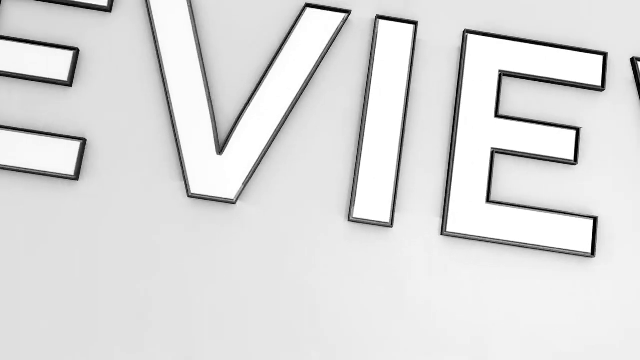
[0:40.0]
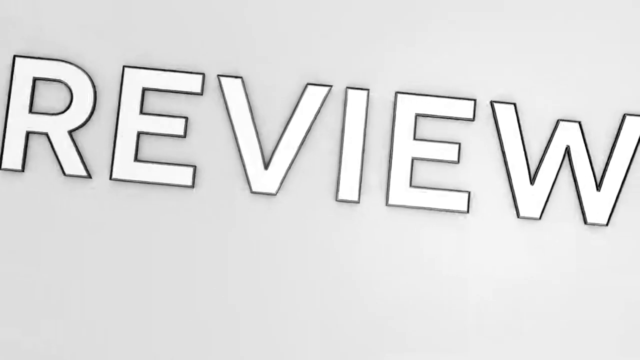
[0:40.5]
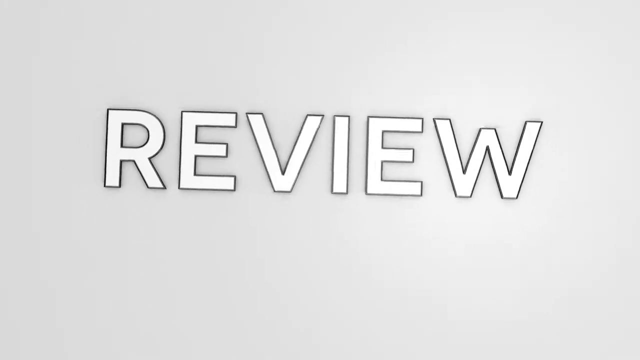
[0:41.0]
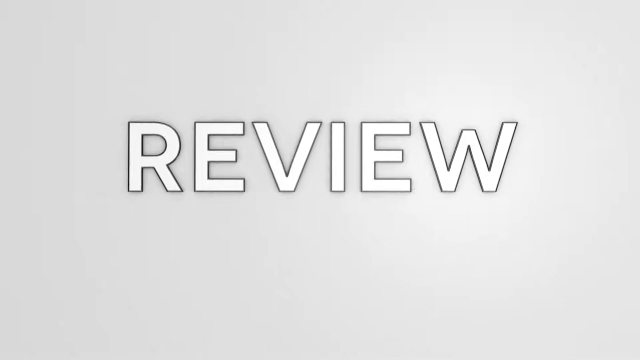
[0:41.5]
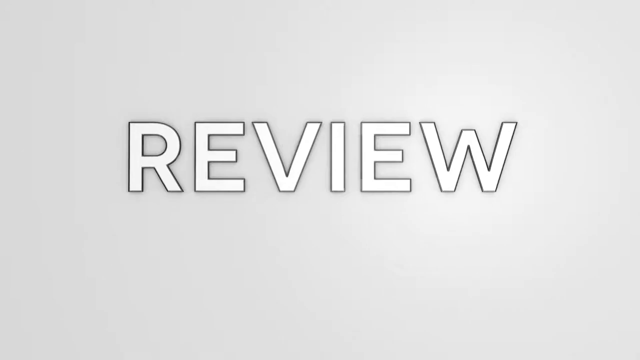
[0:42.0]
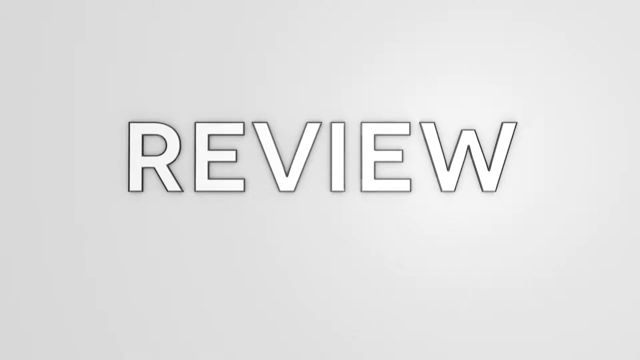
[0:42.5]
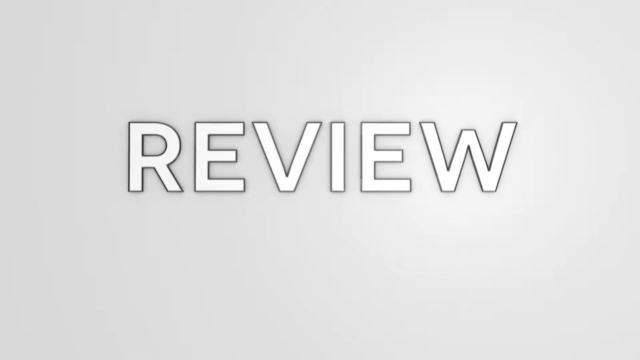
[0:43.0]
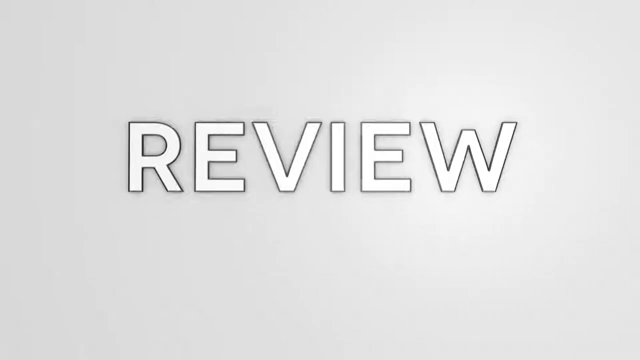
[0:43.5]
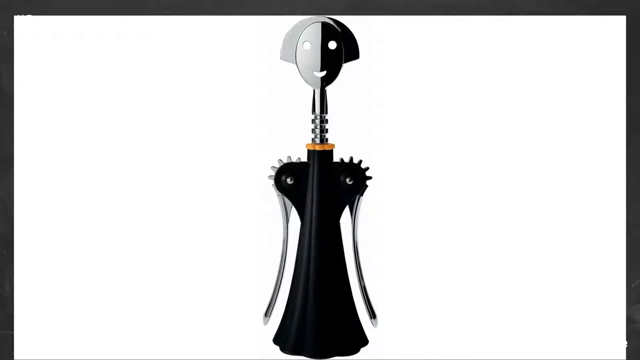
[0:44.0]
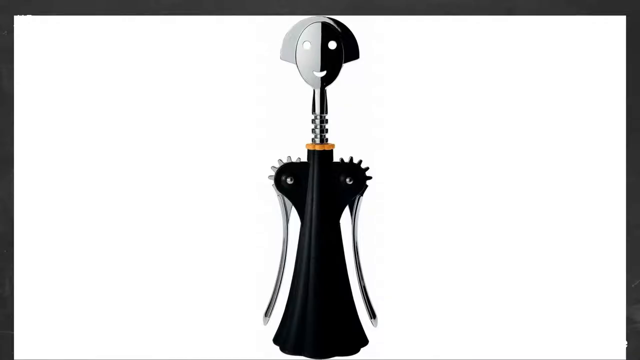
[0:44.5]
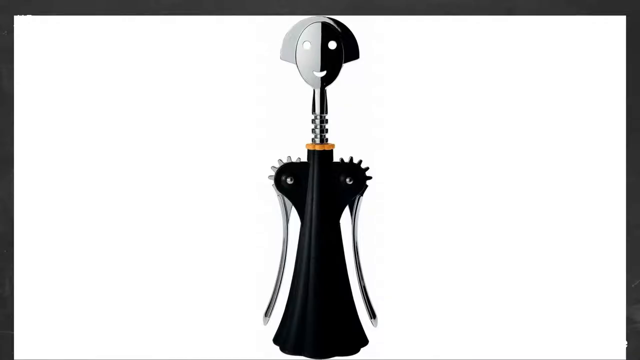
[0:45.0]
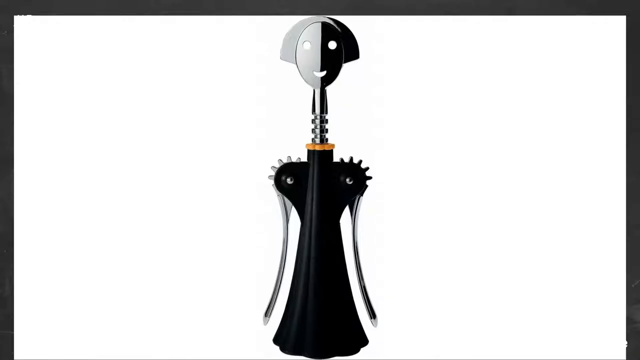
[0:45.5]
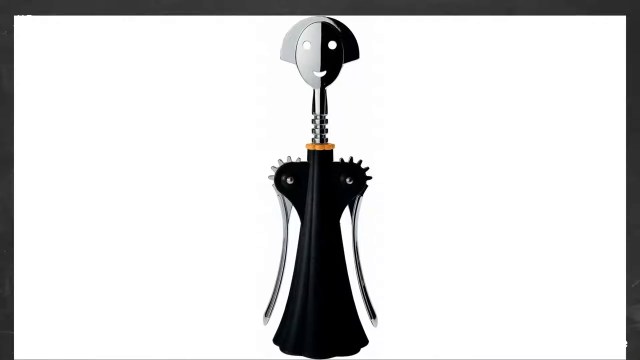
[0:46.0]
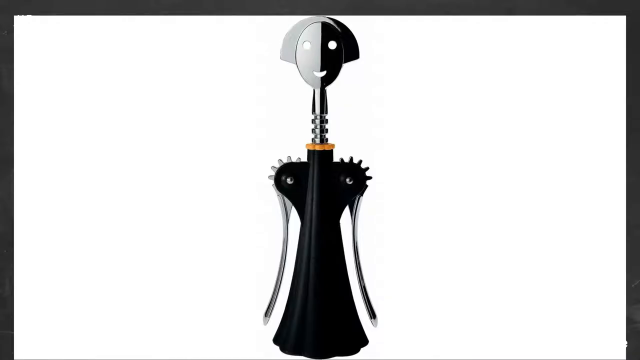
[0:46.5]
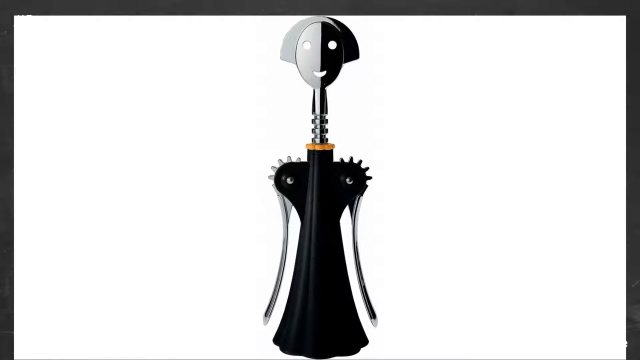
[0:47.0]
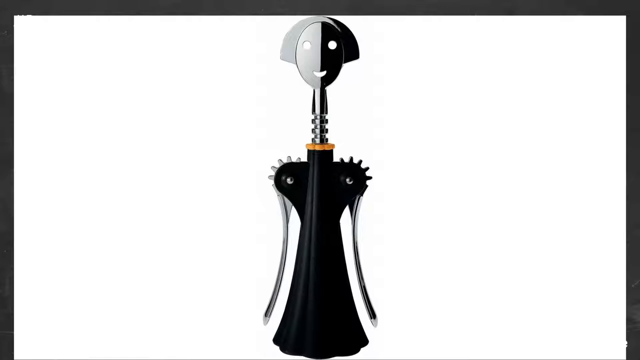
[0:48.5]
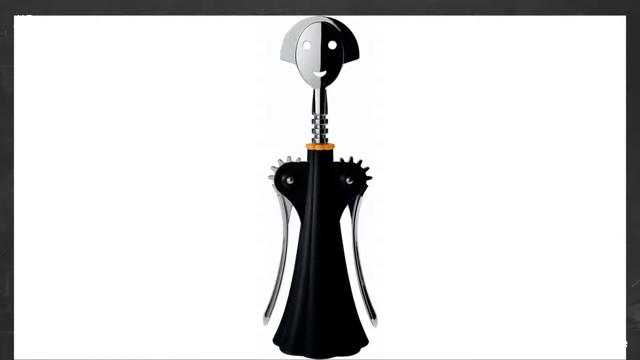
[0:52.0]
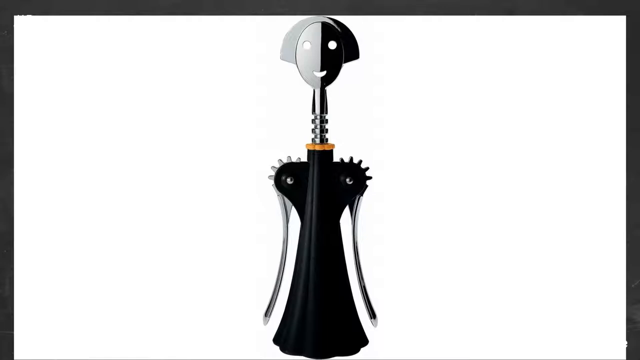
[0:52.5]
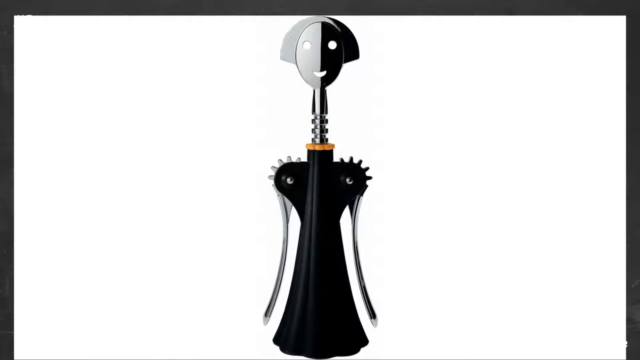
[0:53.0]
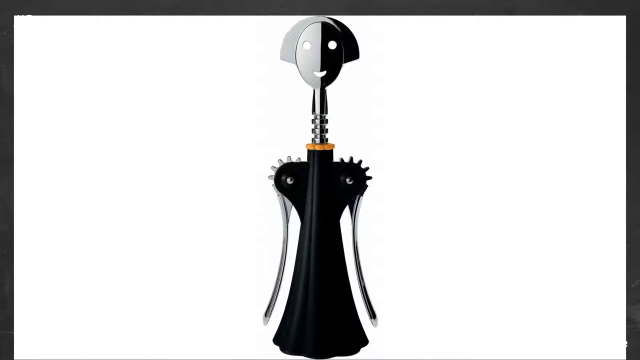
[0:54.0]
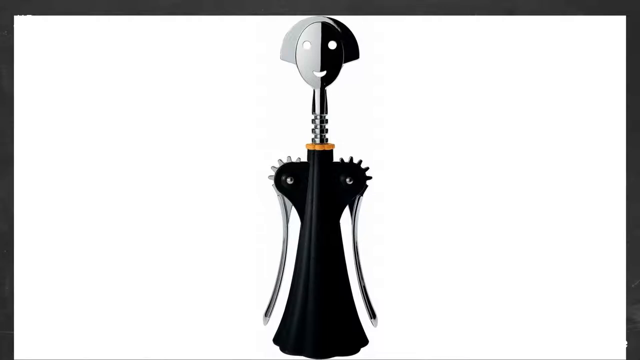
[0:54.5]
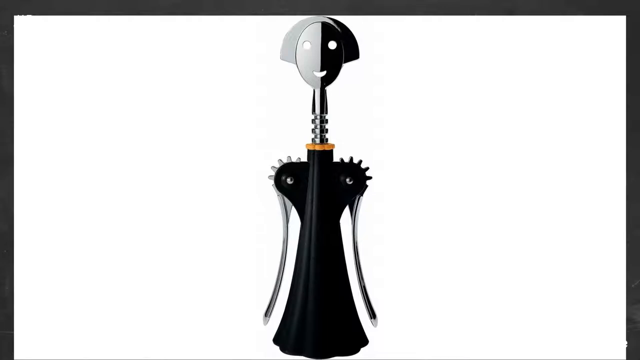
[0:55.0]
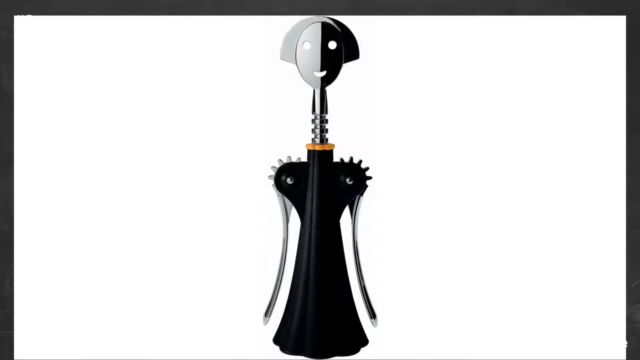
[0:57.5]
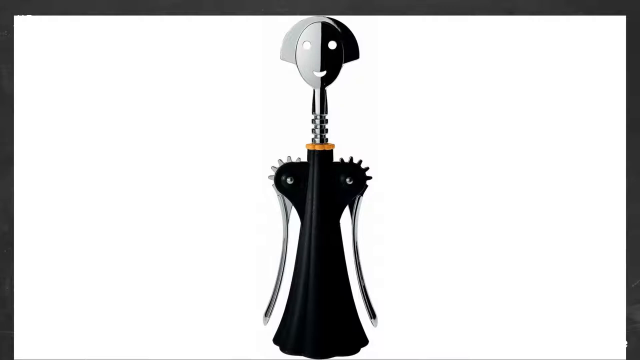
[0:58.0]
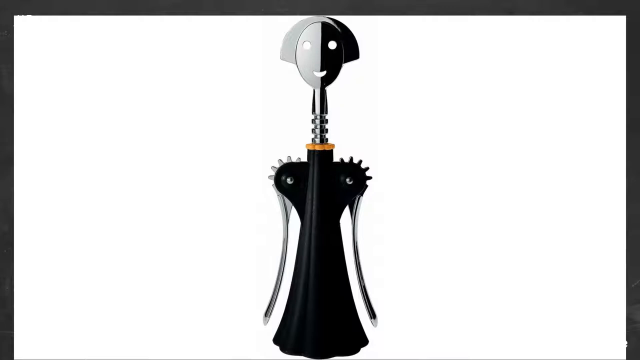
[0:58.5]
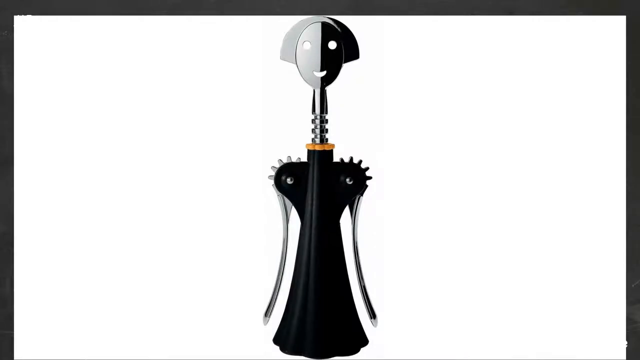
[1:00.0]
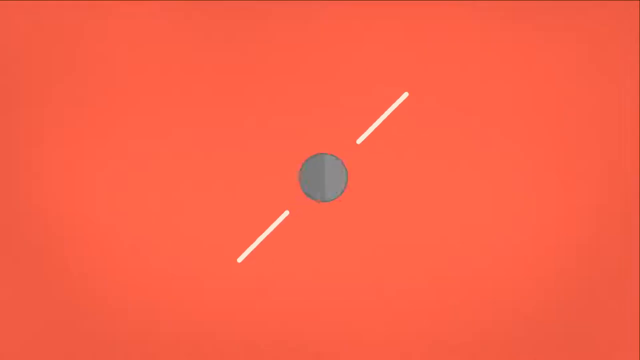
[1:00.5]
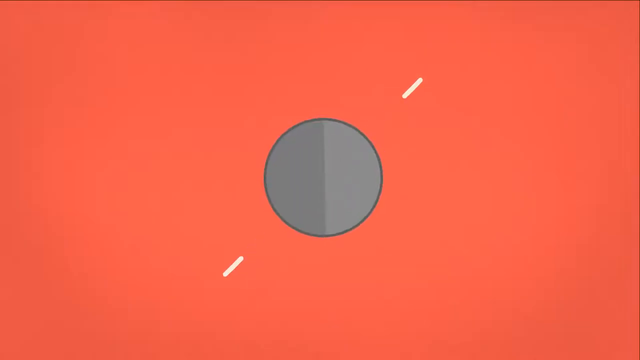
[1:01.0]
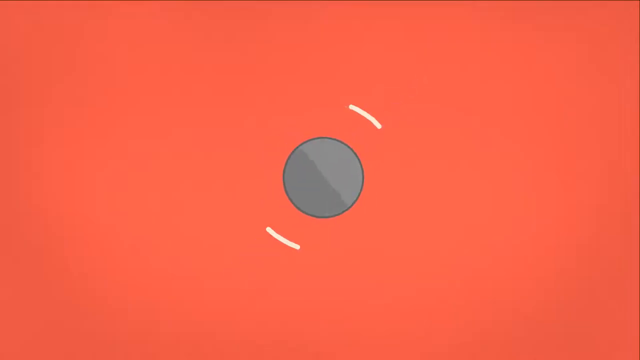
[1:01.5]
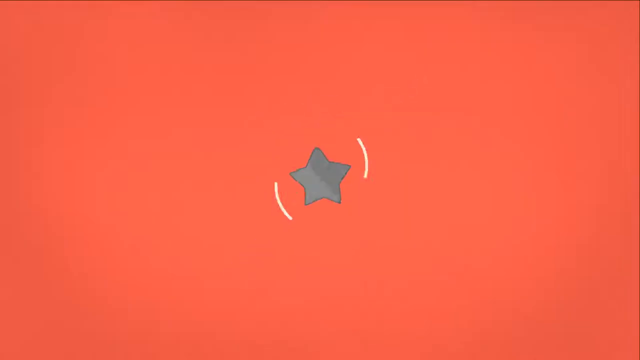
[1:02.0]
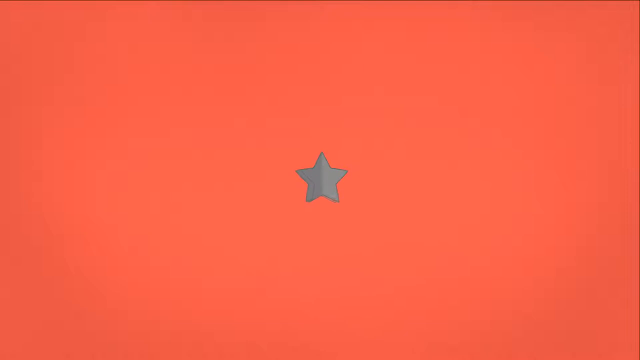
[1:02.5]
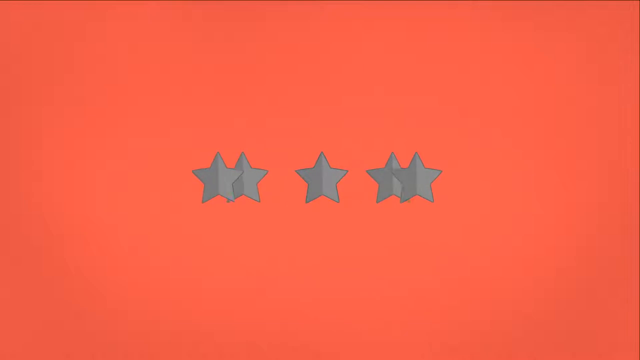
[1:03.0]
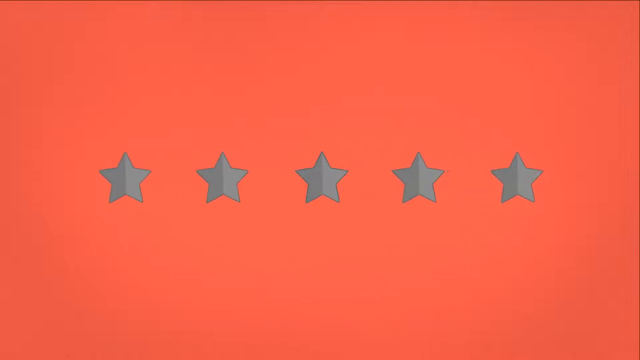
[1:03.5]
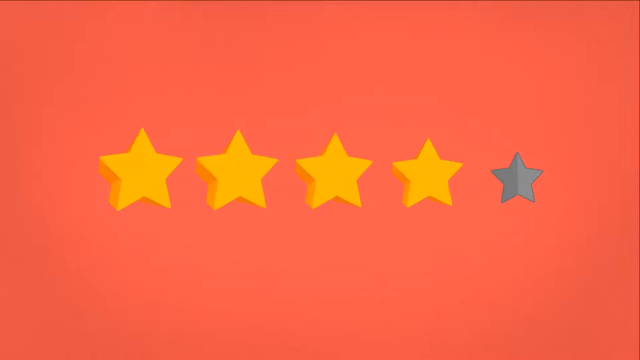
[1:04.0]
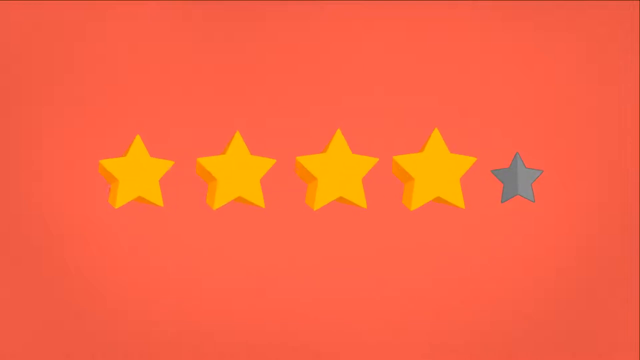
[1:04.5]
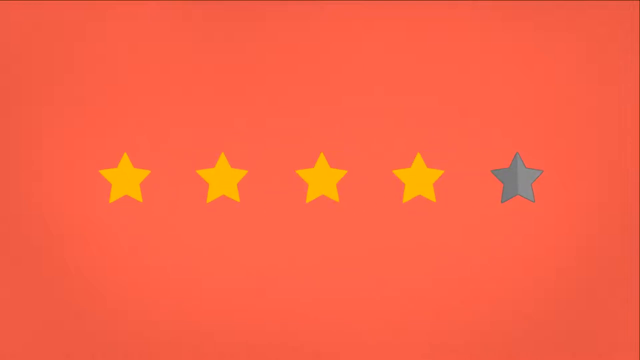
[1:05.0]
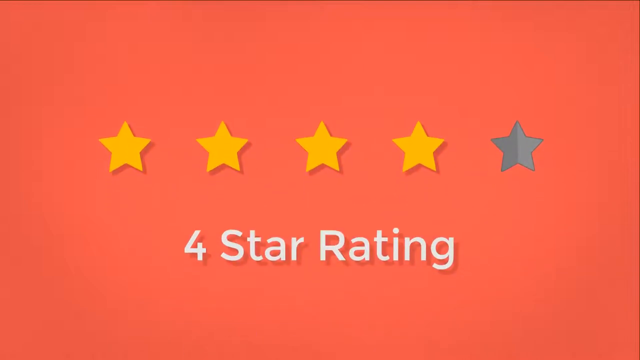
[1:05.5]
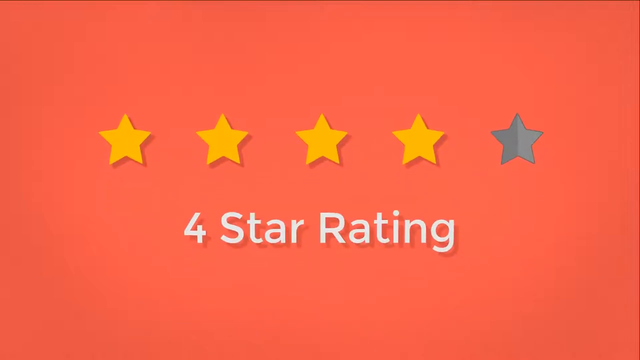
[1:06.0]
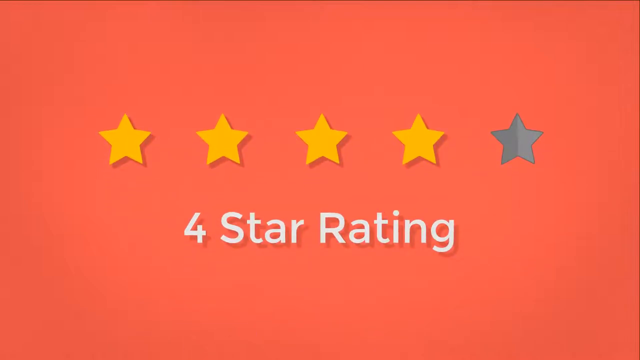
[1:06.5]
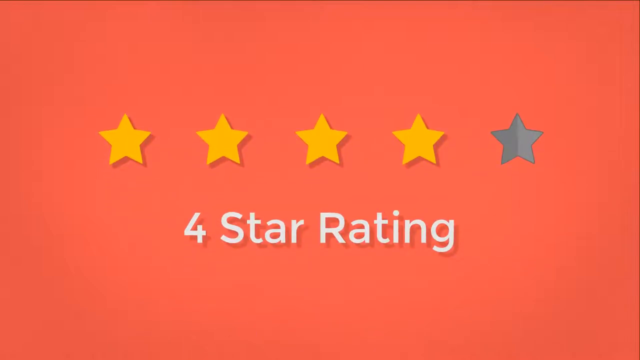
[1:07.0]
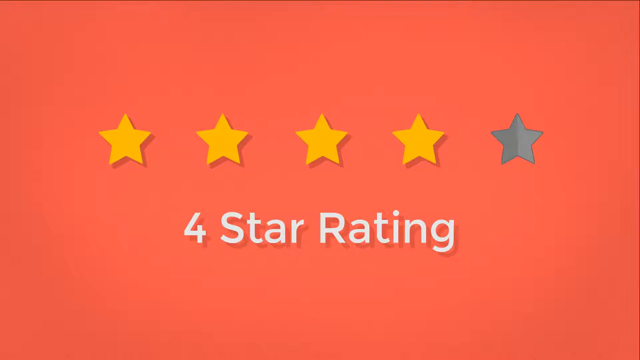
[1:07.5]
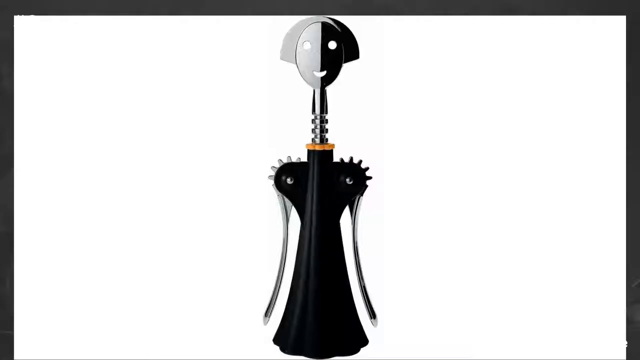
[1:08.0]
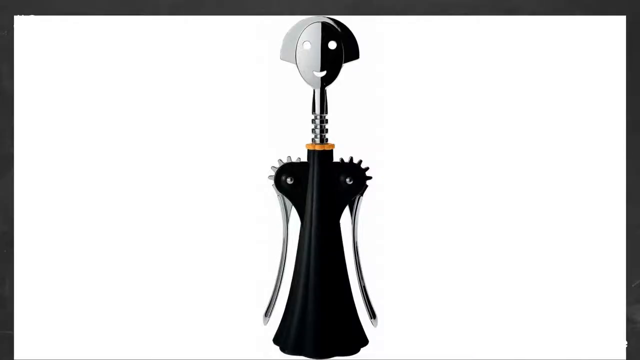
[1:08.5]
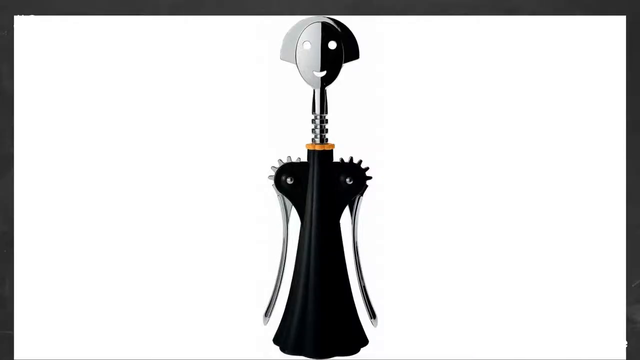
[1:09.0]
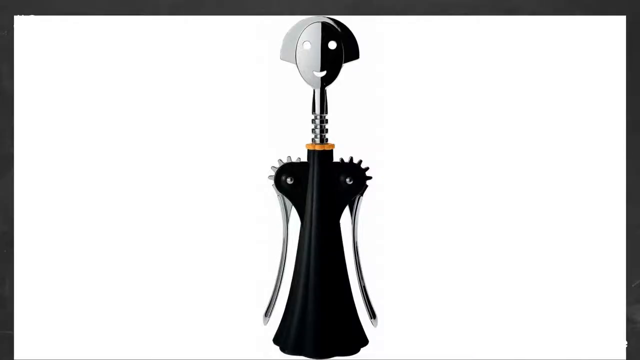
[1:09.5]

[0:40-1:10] On a white background, almost three-dimensional letters spin and come into focus, spelling "REVIEW". The word is written in white with each letter outlined in black, which highlights the blockiness of the letters. The word straightens out and sits centered on the screen, suggesting this is apparently a review of the corkscrew. The corkscrew is then shown again, with its human-like characteristics: it looks like it has eyes, a mouth and kind of short hair, and its arms make it look almost like a female figure. The corkscrew is shown in a long look, and then a four-star rating pops up on the screen.